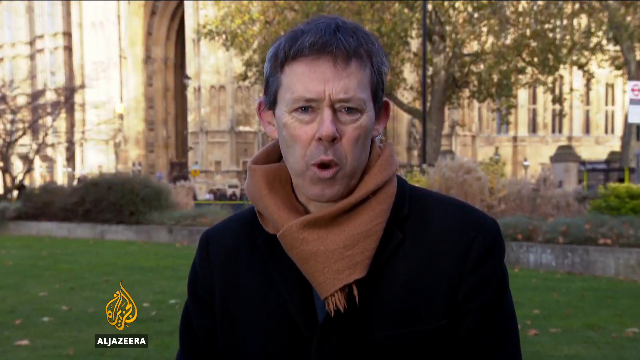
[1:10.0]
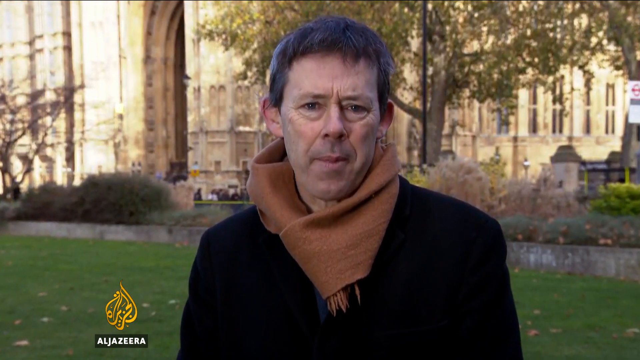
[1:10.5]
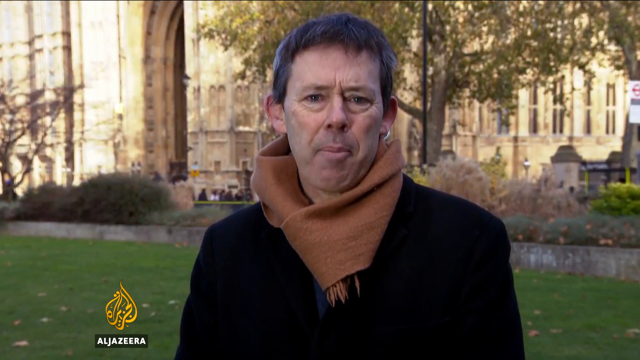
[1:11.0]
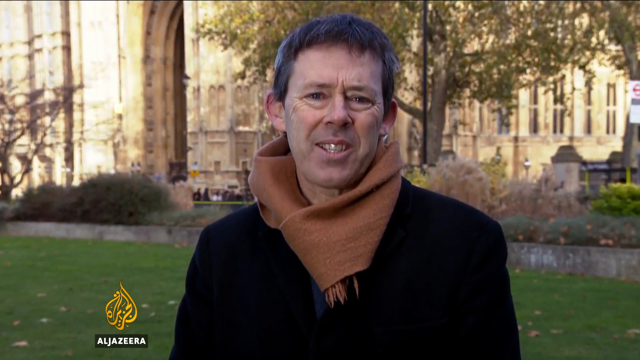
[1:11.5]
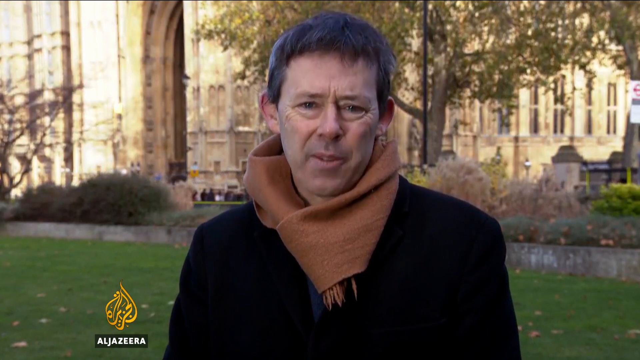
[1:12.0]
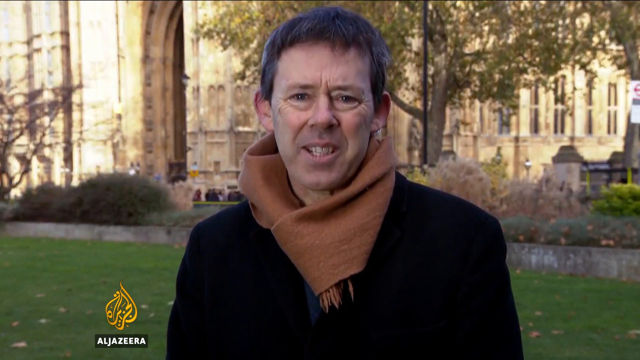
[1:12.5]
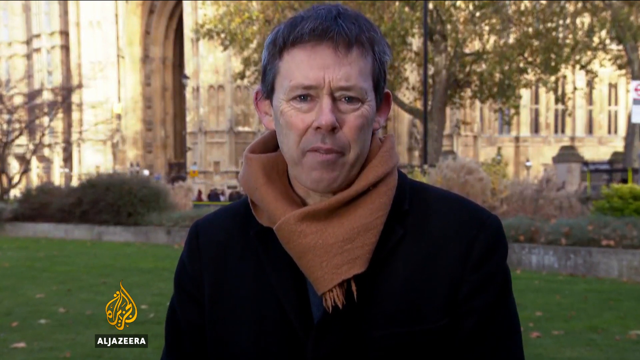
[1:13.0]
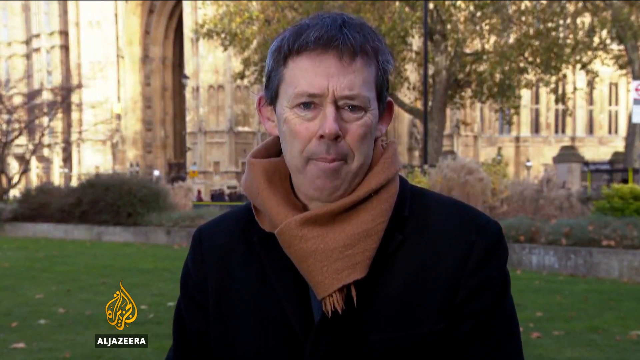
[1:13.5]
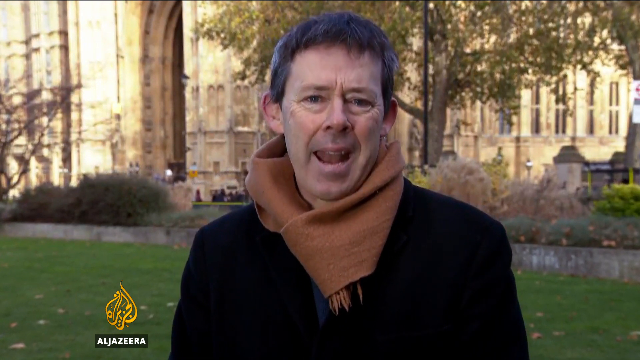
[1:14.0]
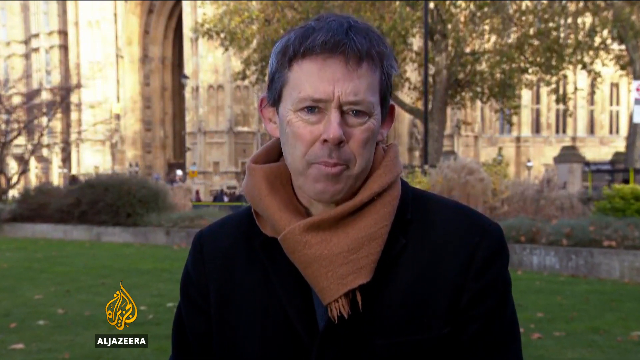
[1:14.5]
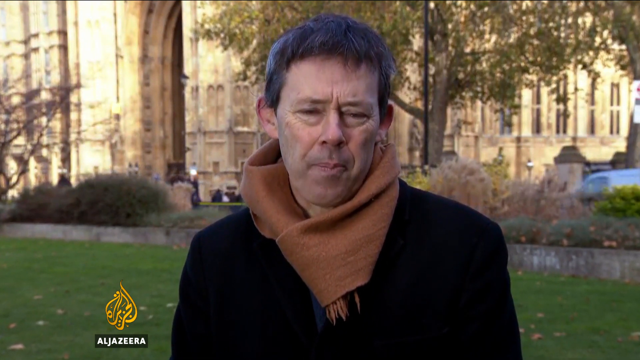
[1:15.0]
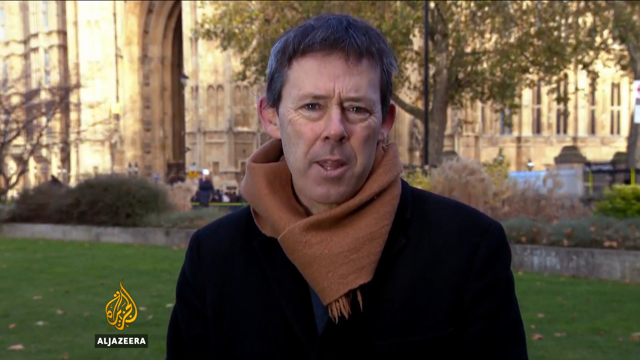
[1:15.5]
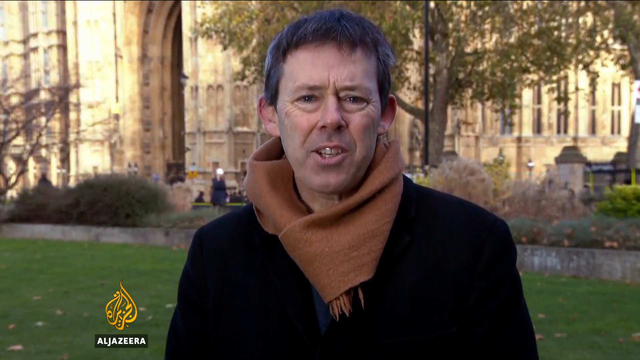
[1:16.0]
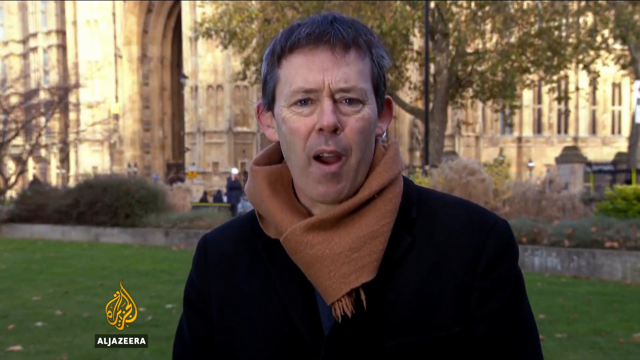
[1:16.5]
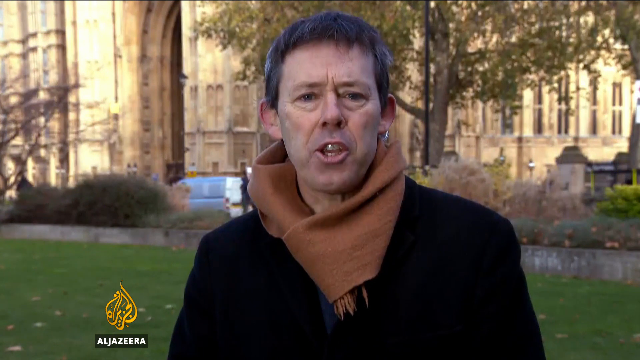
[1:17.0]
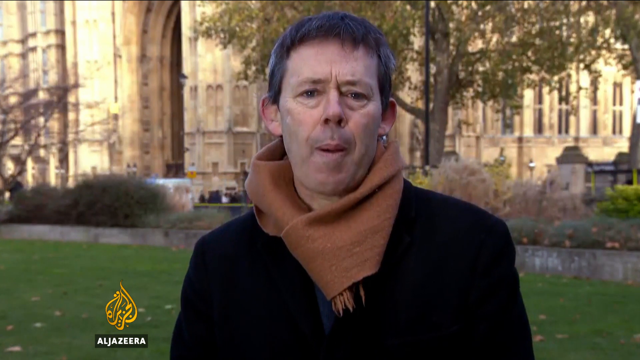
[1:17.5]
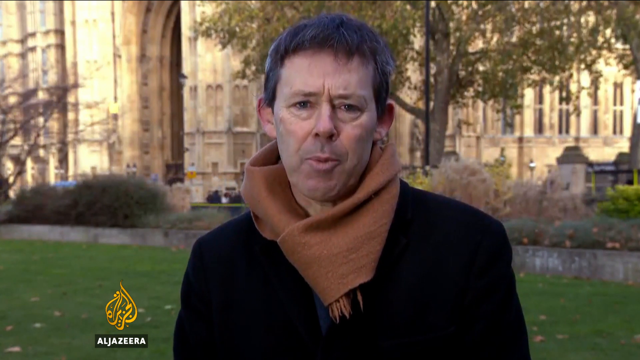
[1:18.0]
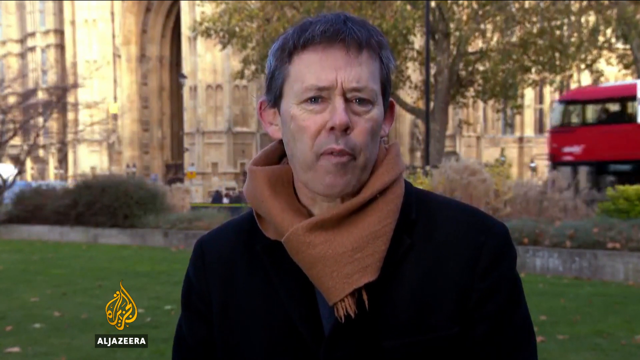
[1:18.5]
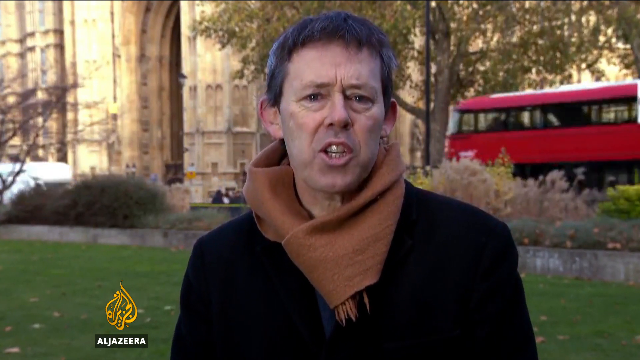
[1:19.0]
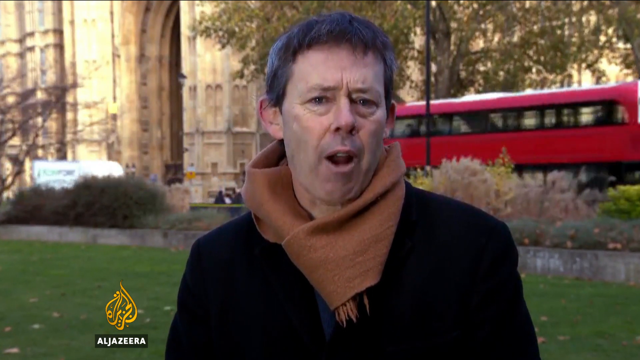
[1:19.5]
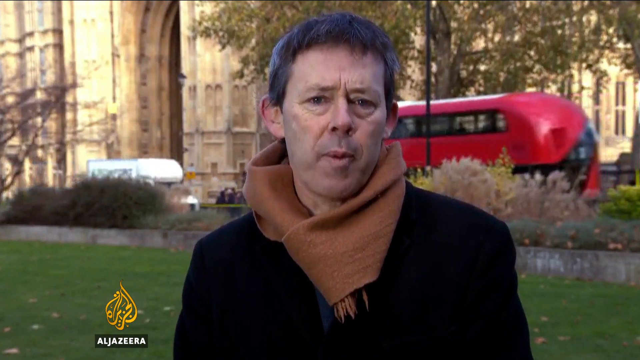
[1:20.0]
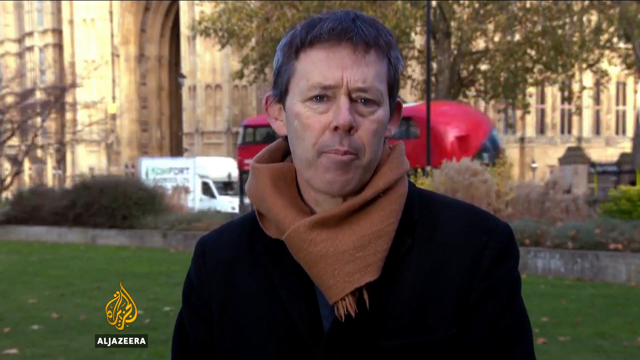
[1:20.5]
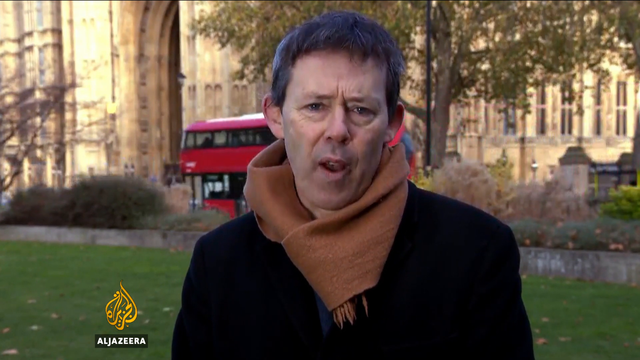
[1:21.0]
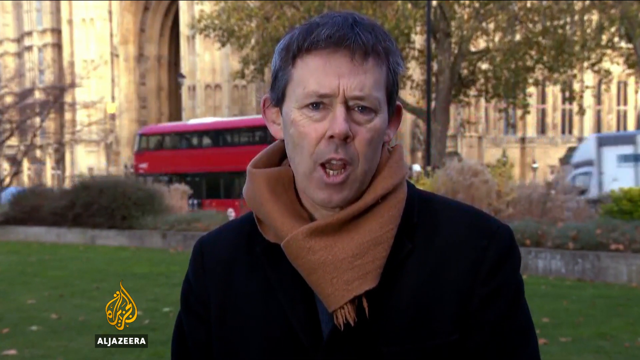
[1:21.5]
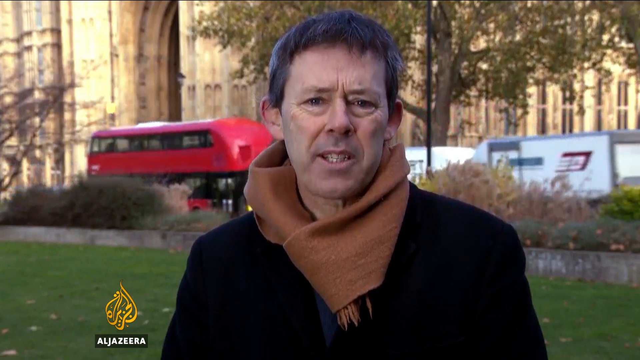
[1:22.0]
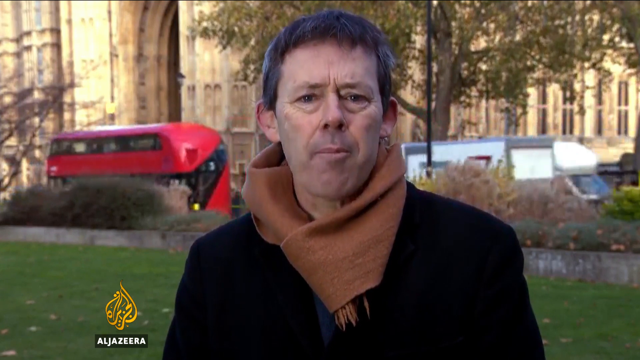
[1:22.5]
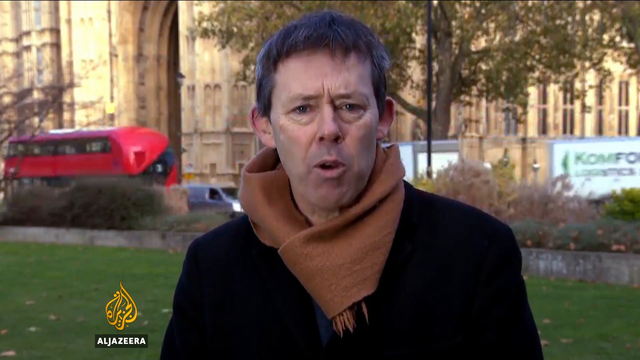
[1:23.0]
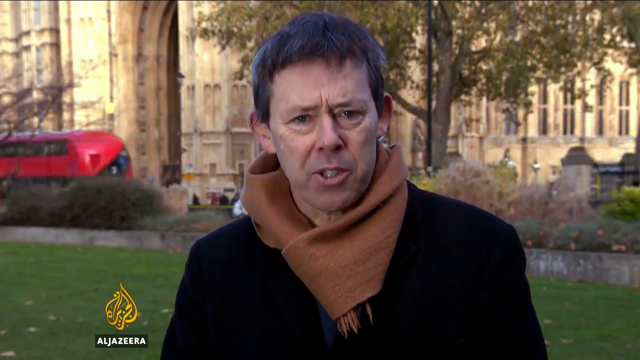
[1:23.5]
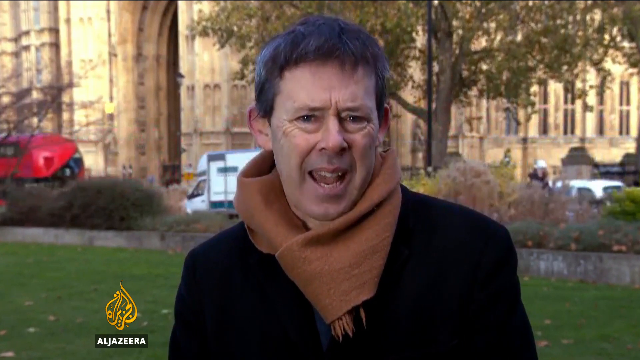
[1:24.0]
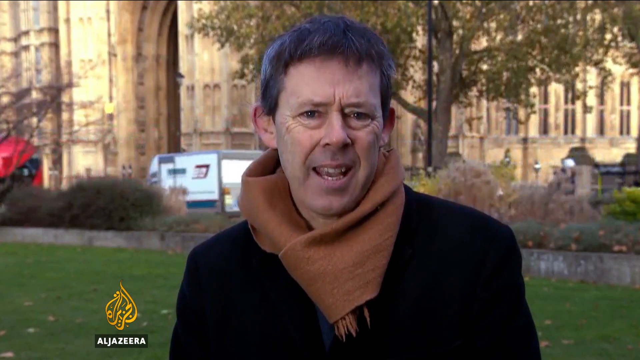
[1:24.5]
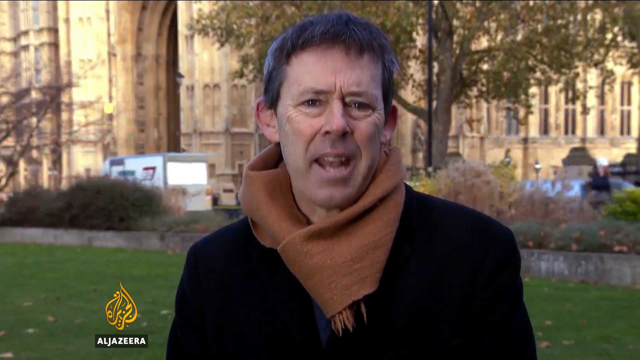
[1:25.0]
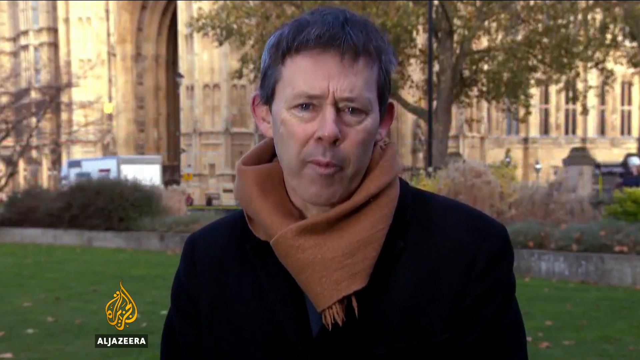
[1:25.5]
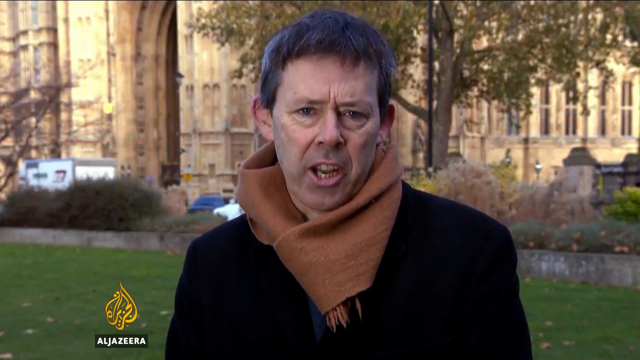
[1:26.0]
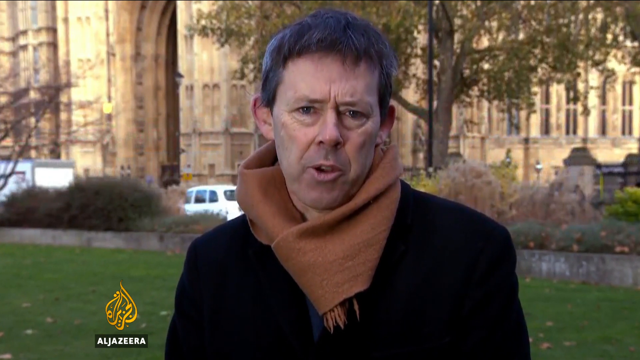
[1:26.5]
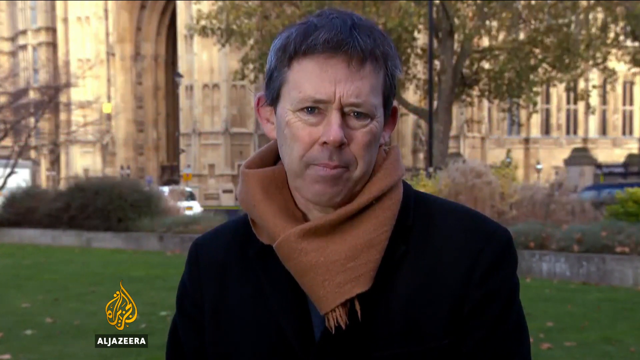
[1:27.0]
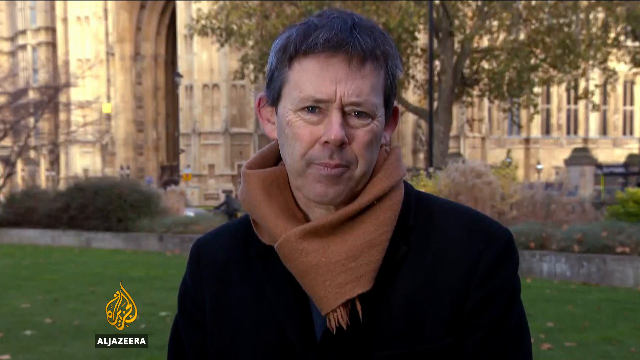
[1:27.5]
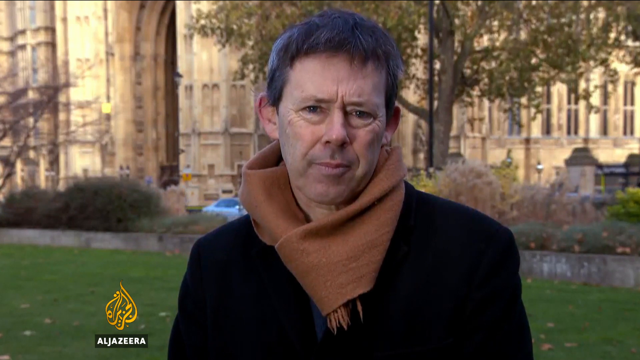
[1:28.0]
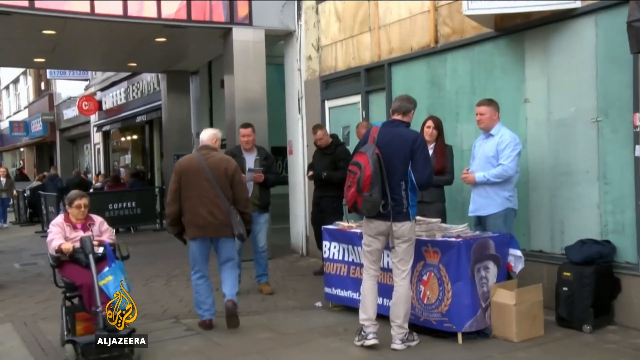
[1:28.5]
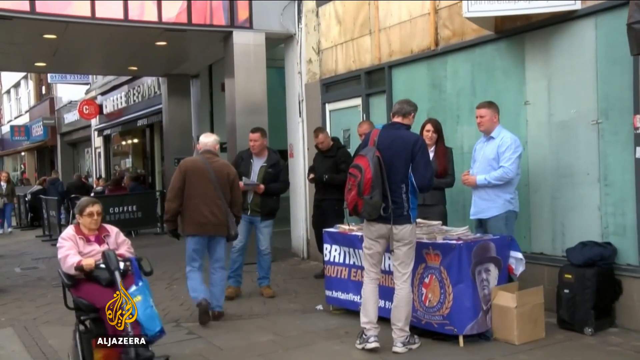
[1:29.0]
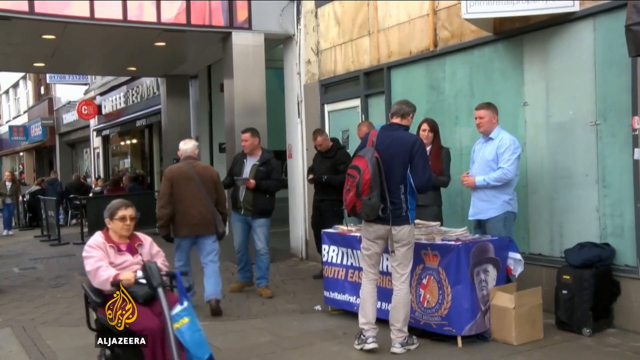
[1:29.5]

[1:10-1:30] The male reporter stands in front of Parliament, facing the camera. He wears a black jacket and a very thick, large tan scarf that is folded toward the left side of his body in front and tucked into his jacket. As he speaks to the camera, he raises up on his tiptoes, leans forward, and then rocks backward. Traffic moves in the background on the road behind him, between him and Parliament. The screen then transitions to another scene, with the Al Jazeera logo watermark in the bottom left corner. It looks like an outdoor sidewalk area lined with shops. A table is set up with a banner around it, two people are standing behind the table, and someone with a red backpack has stopped to talk to them.